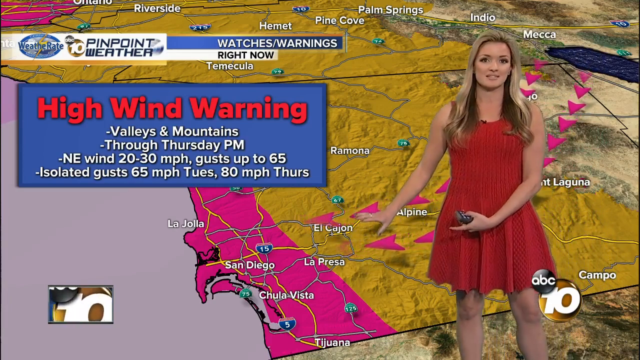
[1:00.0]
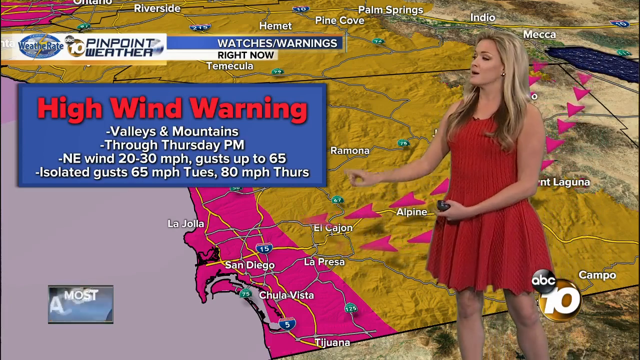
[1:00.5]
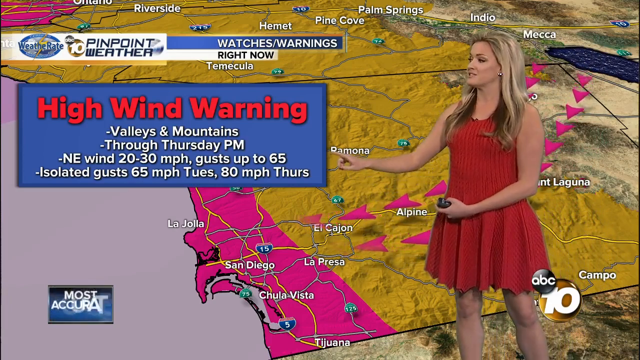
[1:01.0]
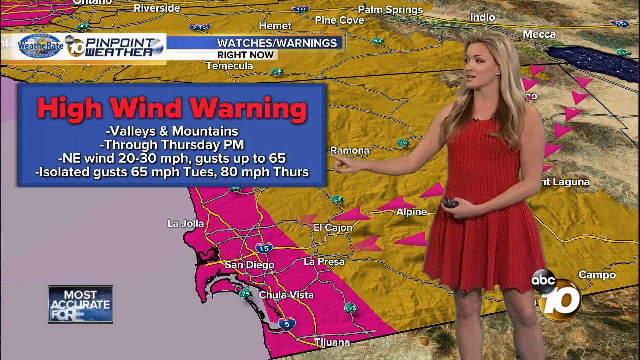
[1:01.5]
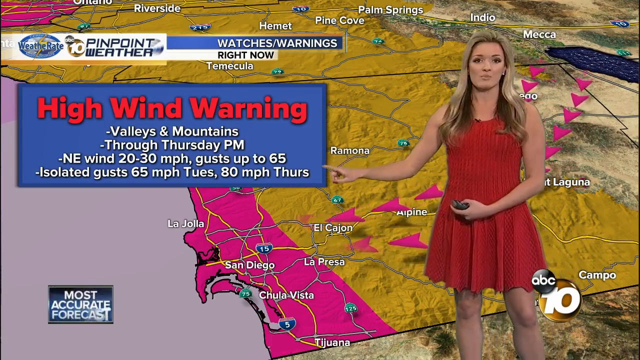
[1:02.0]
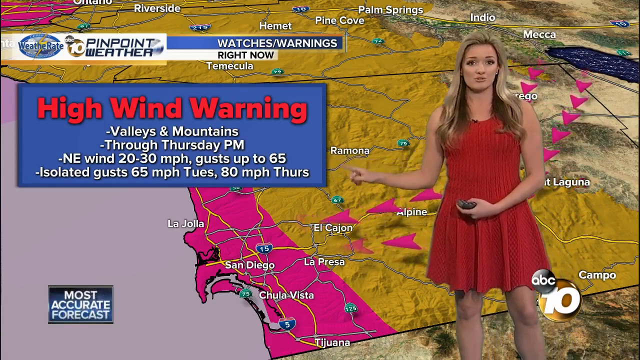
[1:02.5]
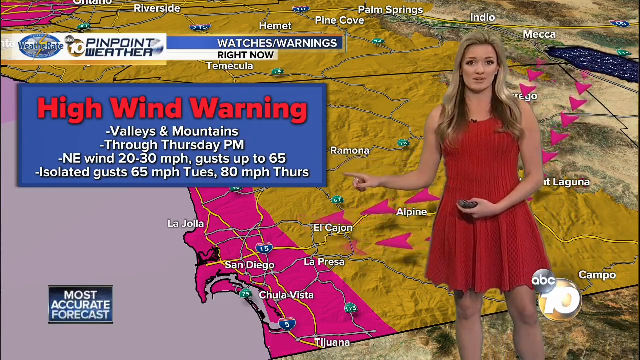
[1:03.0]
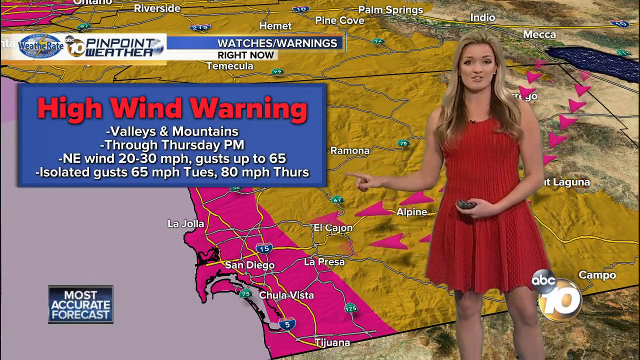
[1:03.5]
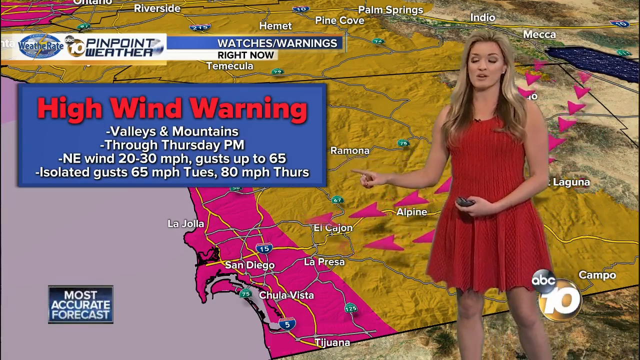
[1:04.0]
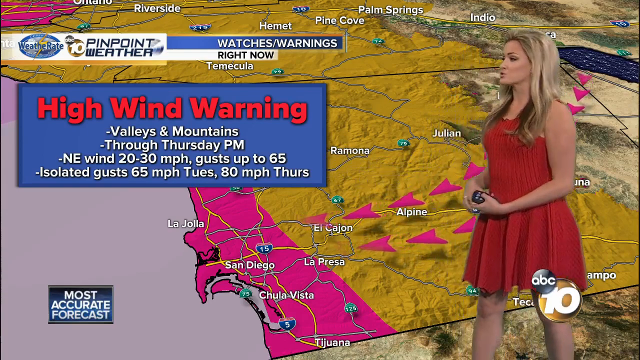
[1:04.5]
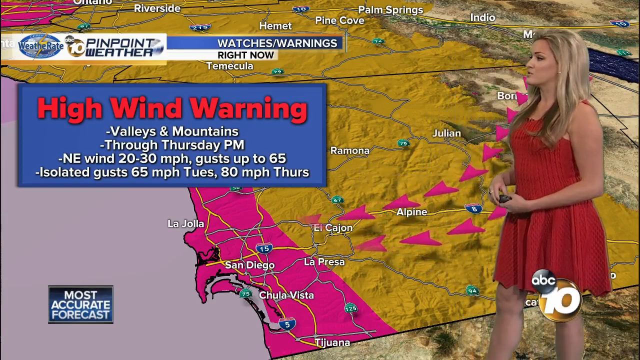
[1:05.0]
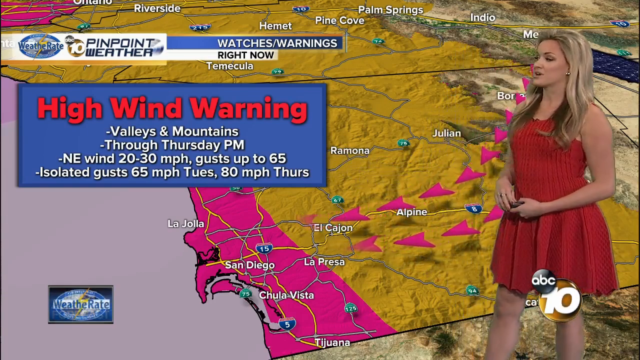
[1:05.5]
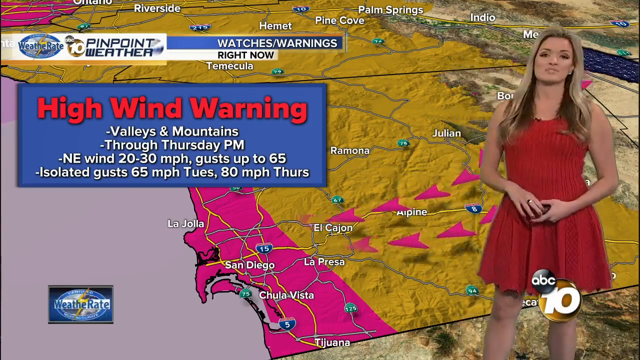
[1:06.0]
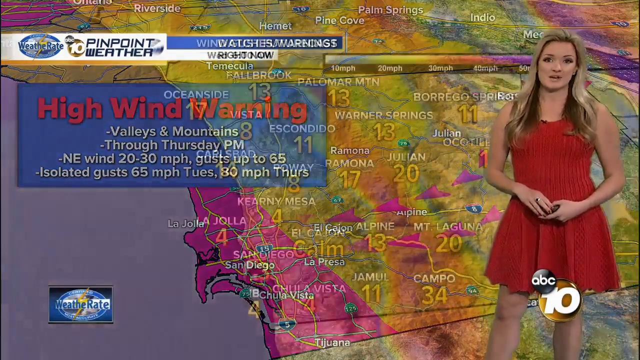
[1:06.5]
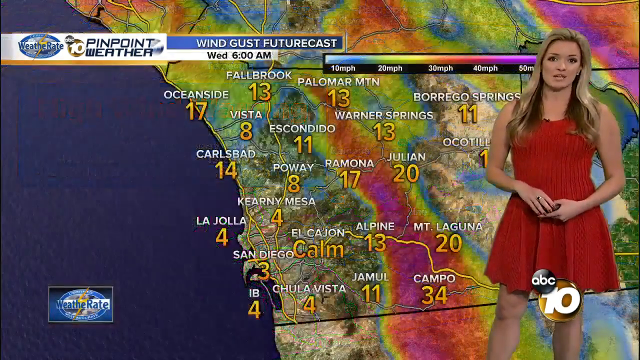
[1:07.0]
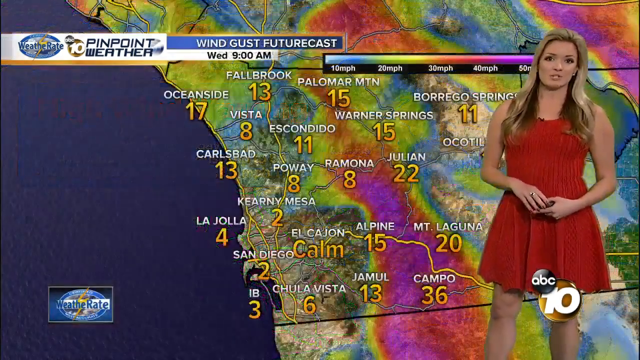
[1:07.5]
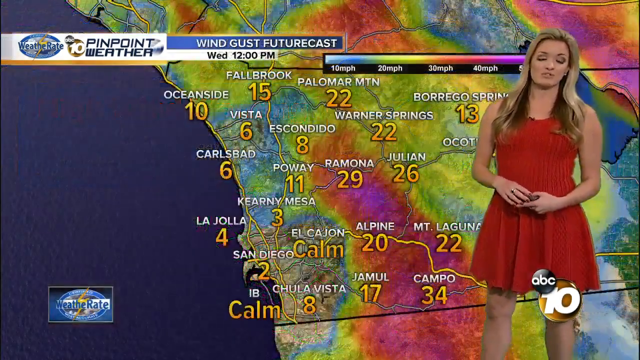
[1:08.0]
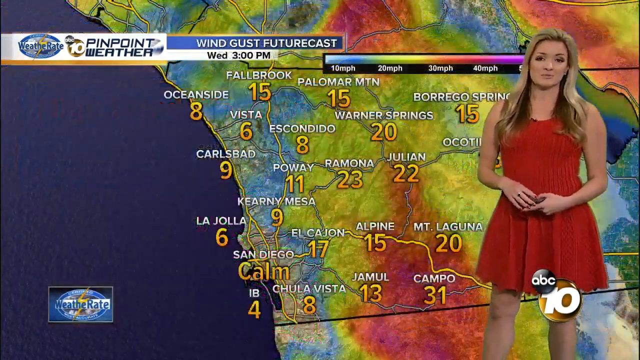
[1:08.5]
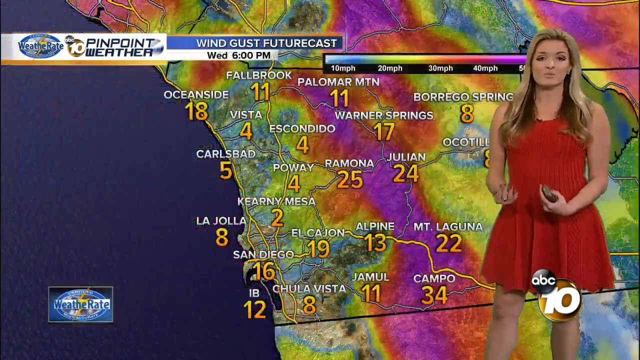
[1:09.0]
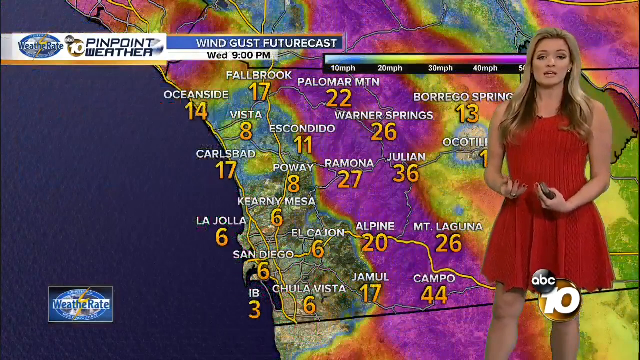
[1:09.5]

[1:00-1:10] A map shows places and their temperatures in different parts of the country. The lady points to pink signs that seem to indicate high wind coming through. A future cast for Wednesday night shows the places with their numbers, apparently indicating average or calm conditions, and she keeps explaining the weather chart.